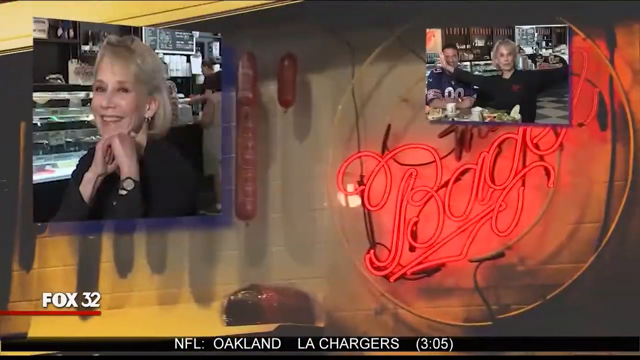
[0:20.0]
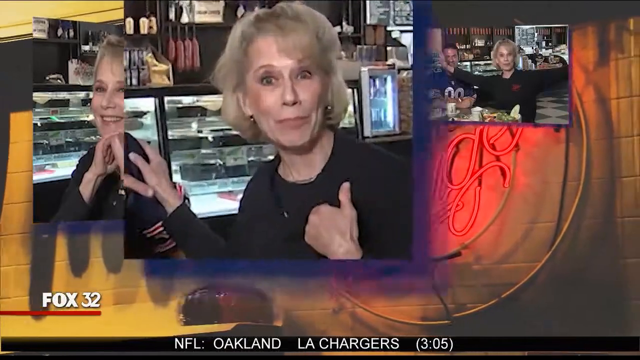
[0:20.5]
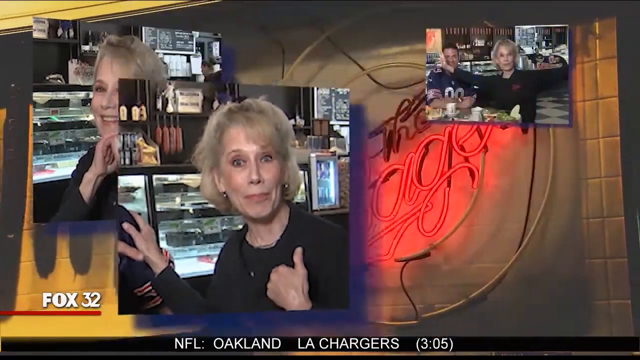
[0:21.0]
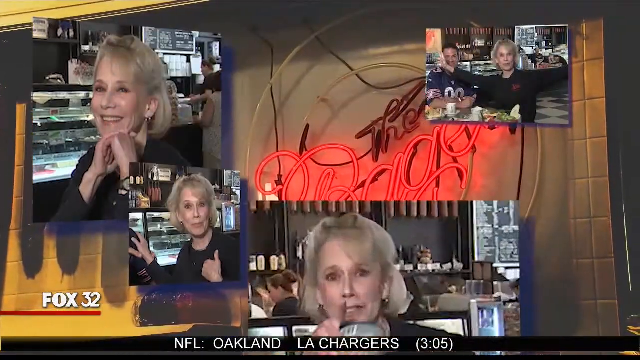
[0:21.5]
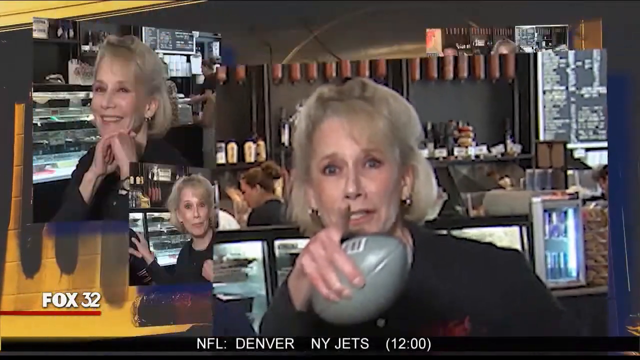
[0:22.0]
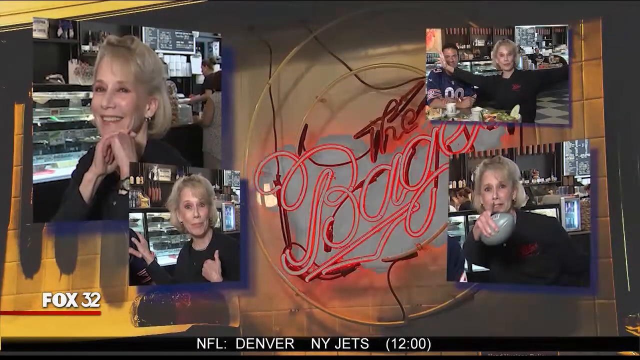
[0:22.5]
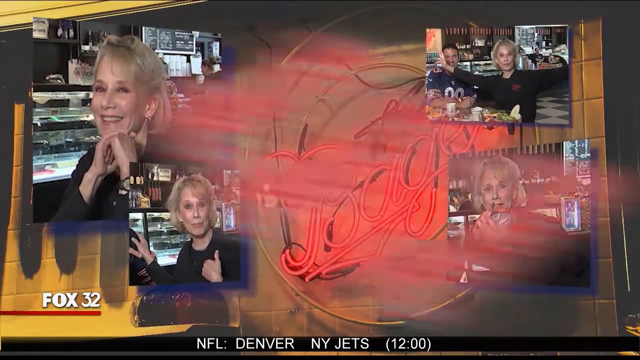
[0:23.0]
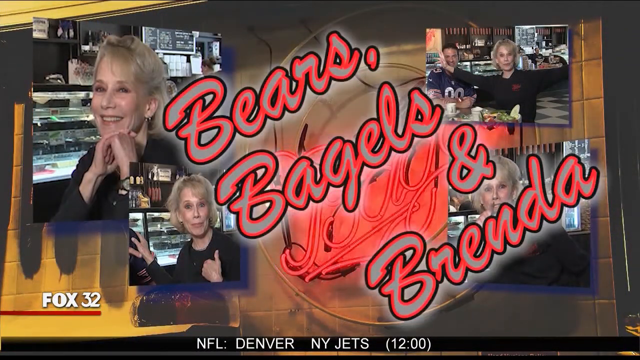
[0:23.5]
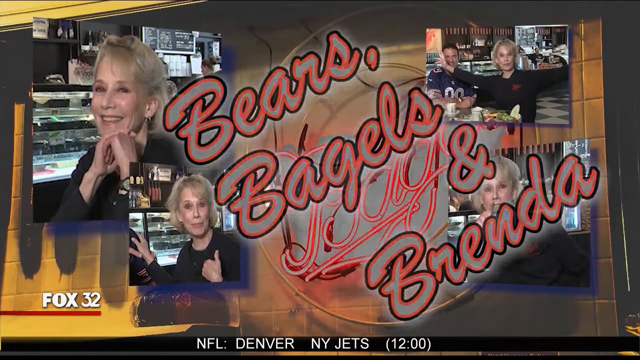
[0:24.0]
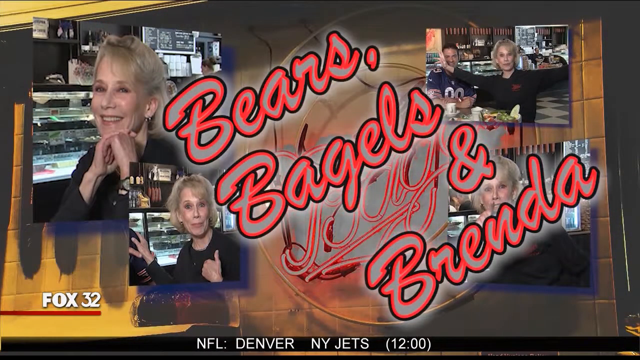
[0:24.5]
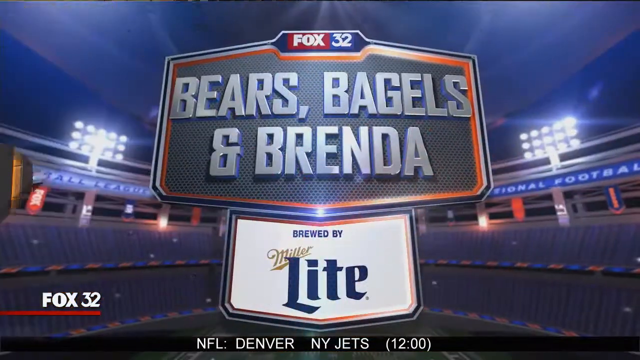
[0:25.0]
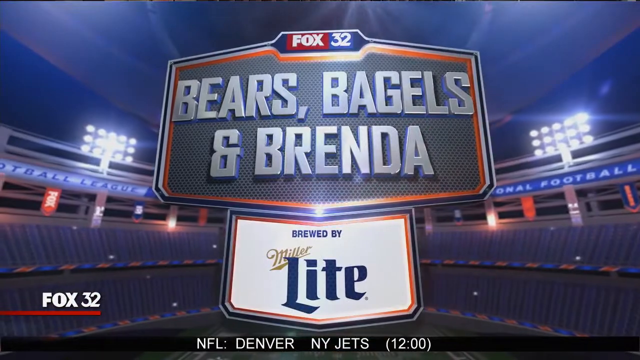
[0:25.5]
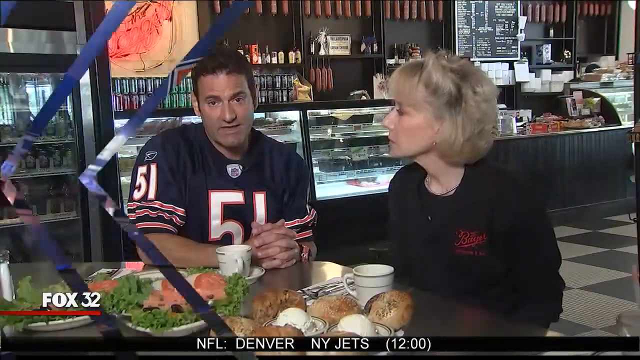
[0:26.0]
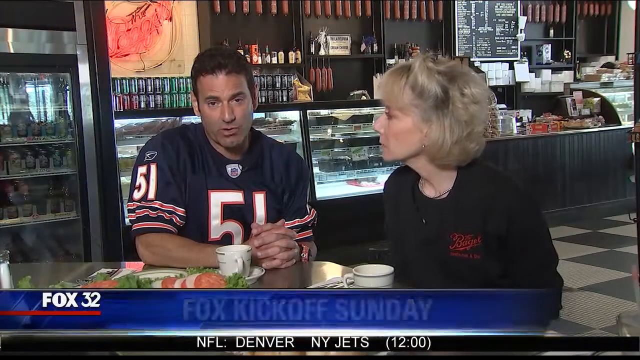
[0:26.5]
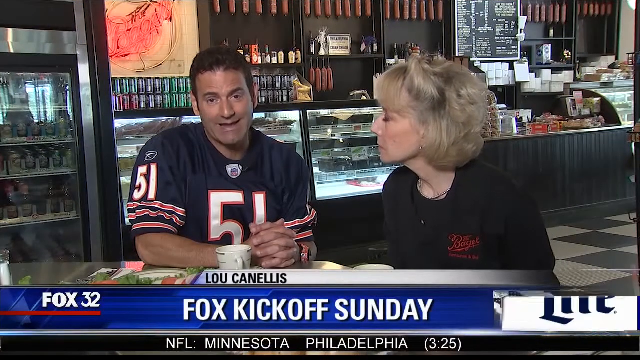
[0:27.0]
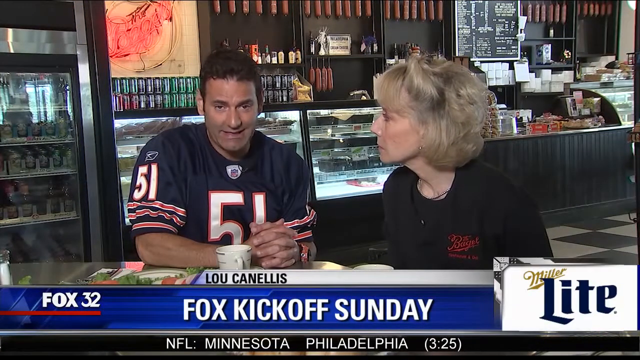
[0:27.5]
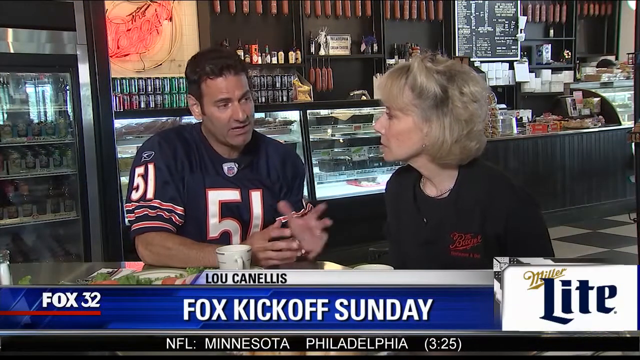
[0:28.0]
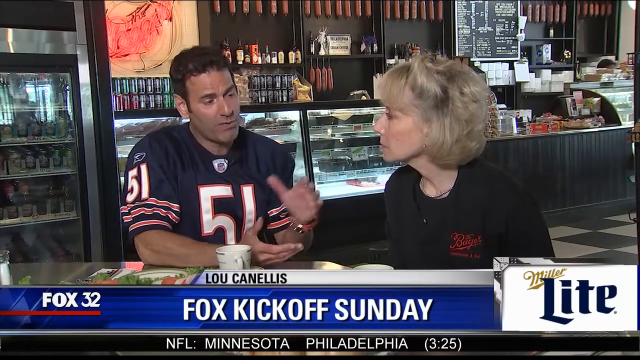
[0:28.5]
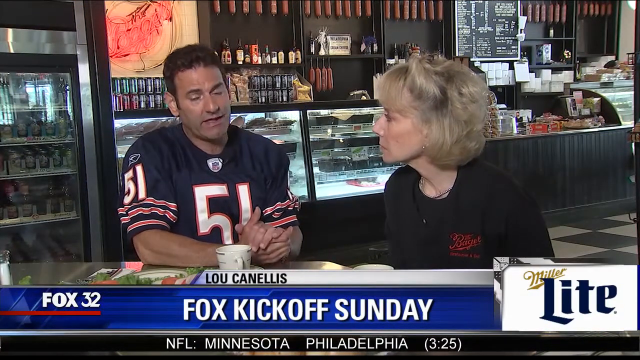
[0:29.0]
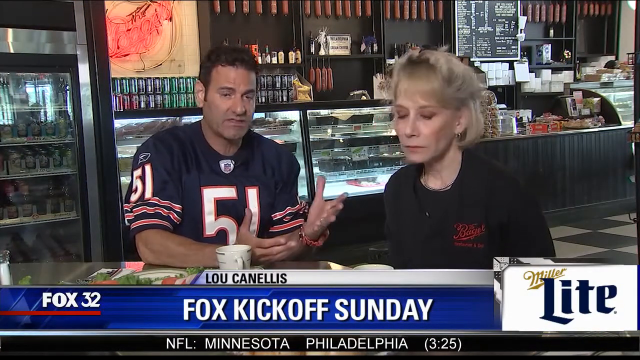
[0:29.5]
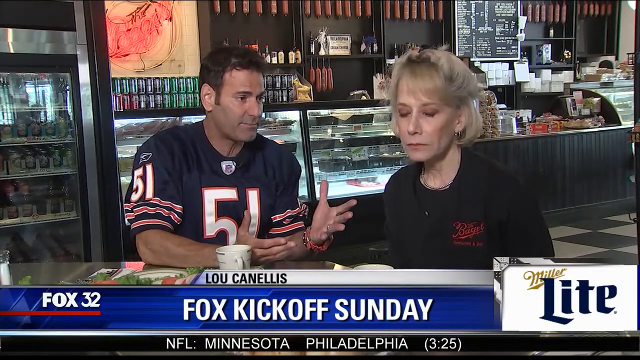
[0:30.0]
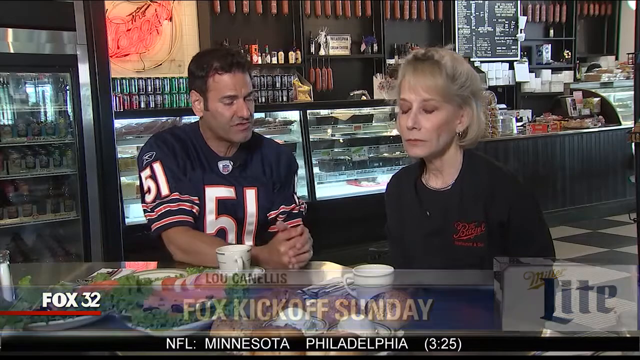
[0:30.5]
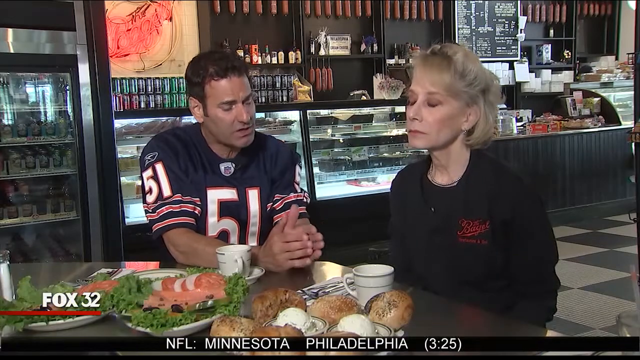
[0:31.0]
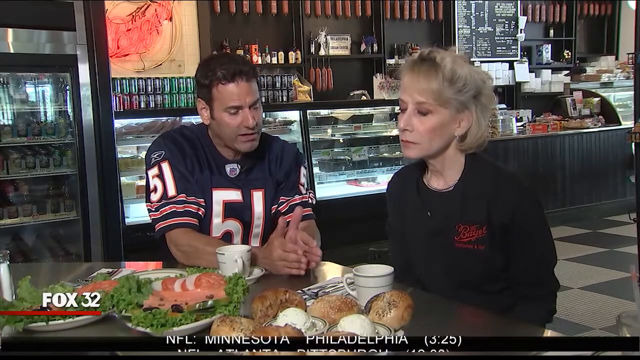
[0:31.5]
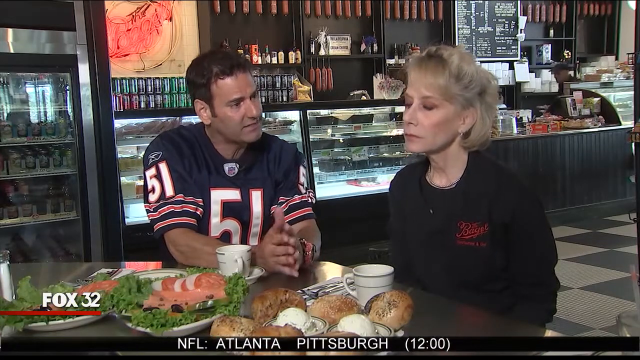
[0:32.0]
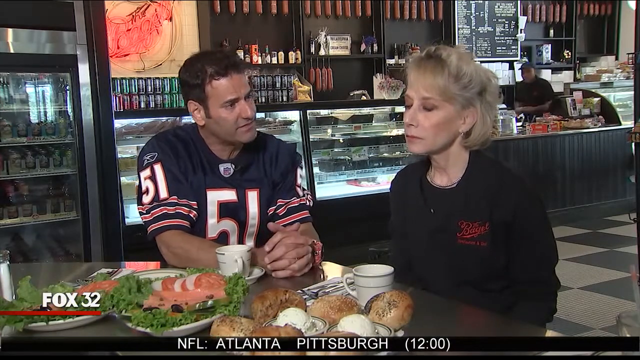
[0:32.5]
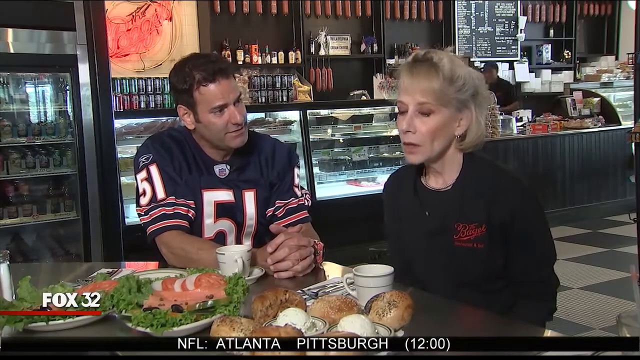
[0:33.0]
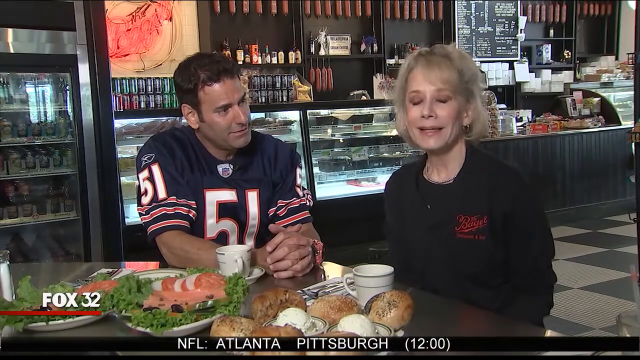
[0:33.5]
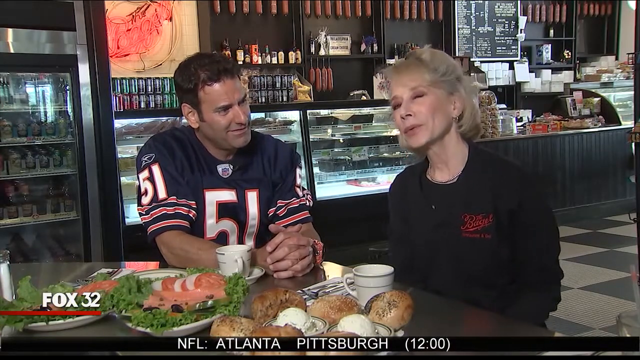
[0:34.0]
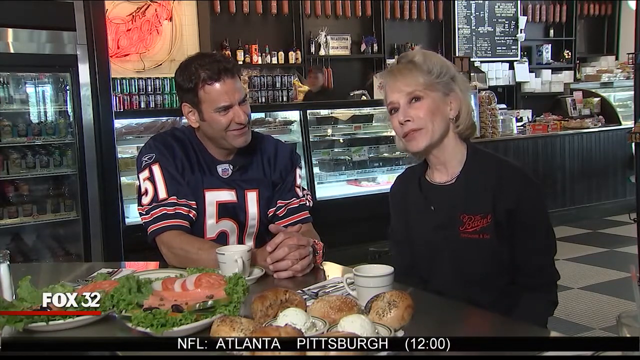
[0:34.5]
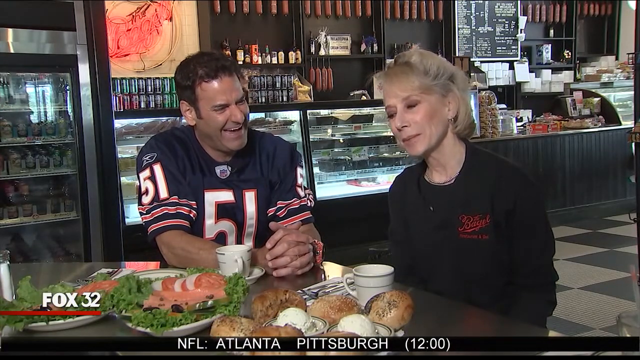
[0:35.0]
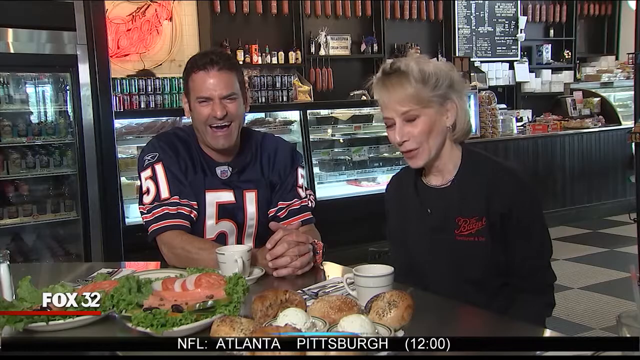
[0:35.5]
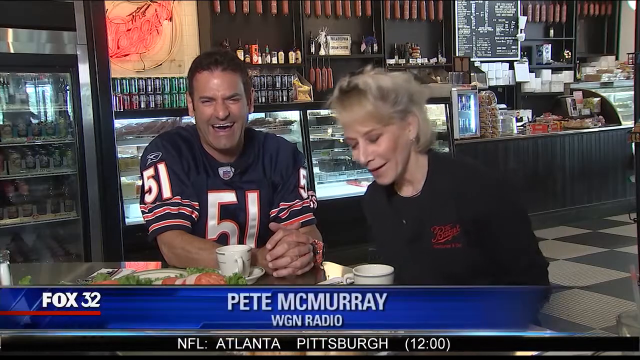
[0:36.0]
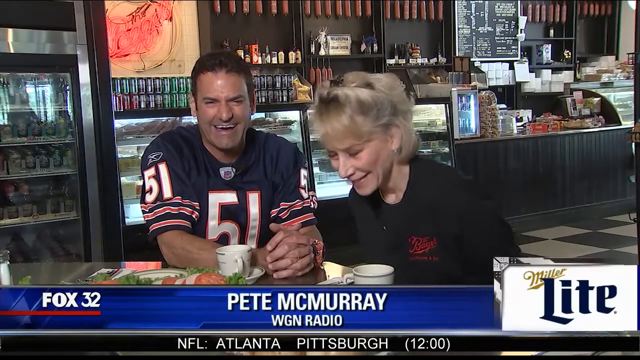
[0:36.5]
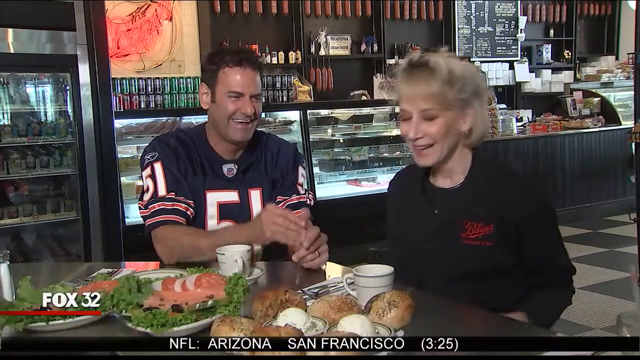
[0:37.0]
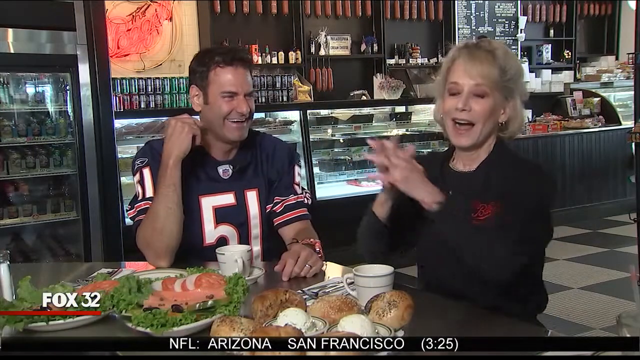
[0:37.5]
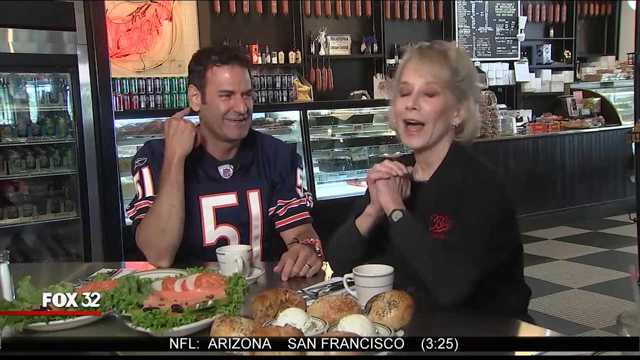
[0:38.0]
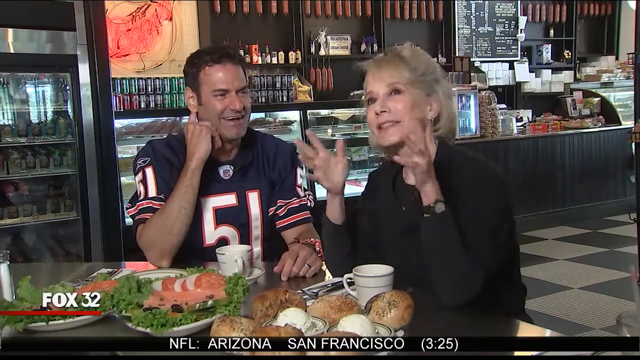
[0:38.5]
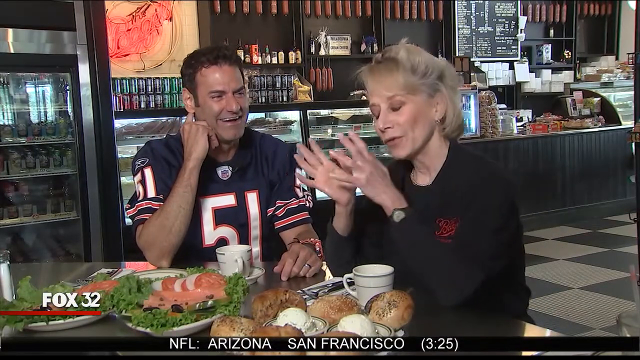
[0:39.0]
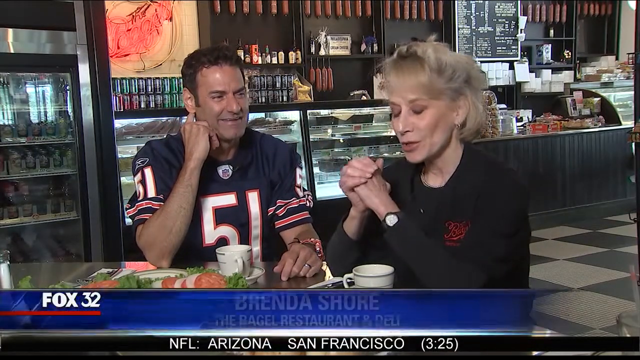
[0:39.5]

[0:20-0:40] The thumbnail shows two pictures of the same woman, who has blonde hair, is probably in her 60s, and wears a black top and a black watch, sitting at a restaurant with a man in a navy football jersey. The woman is shown four times, and "Bears, Bagels and Brenda" appears in neon, flashing lights as the name of the restaurant. The woman and the man from the pictures sit at a restaurant table with two mugs on each side and food including lettuce, tomatoes, bread and cheese. They laugh and look like they are having a nice time. The news channel is Fox 32.